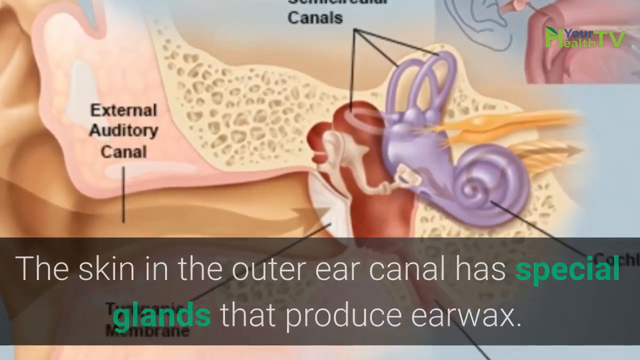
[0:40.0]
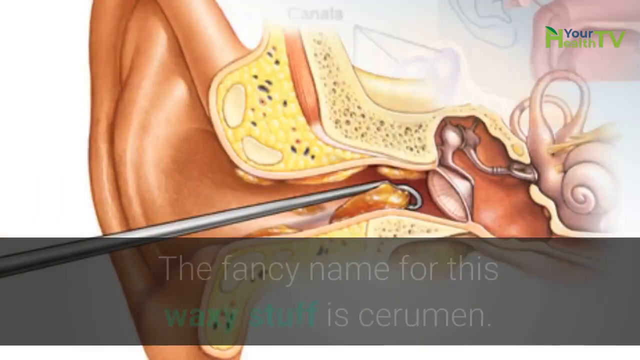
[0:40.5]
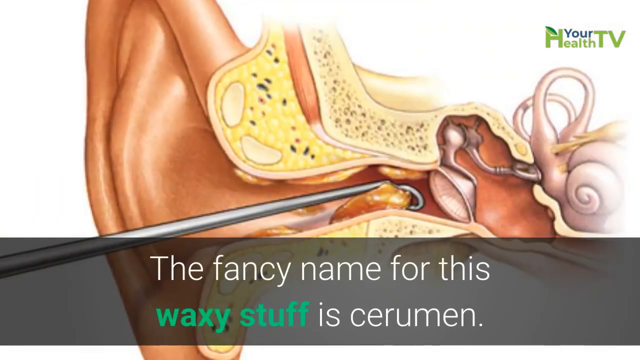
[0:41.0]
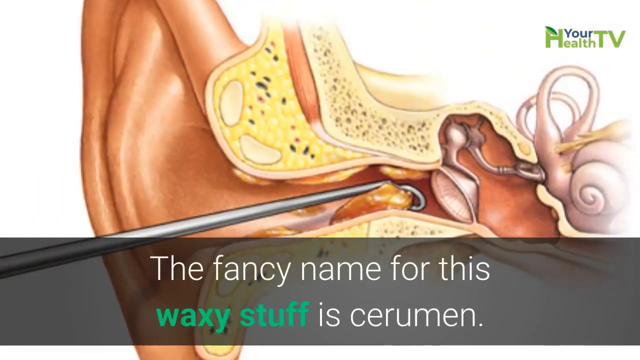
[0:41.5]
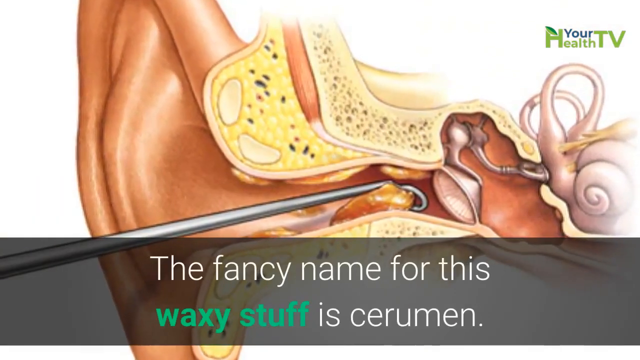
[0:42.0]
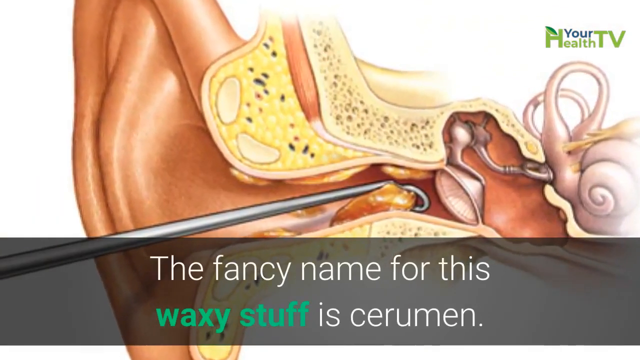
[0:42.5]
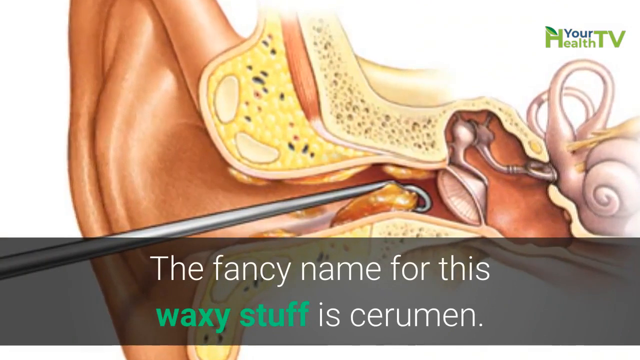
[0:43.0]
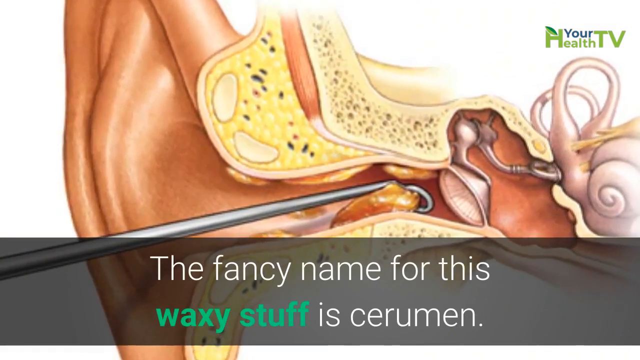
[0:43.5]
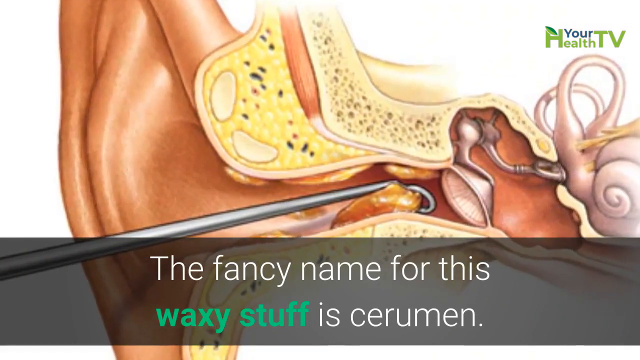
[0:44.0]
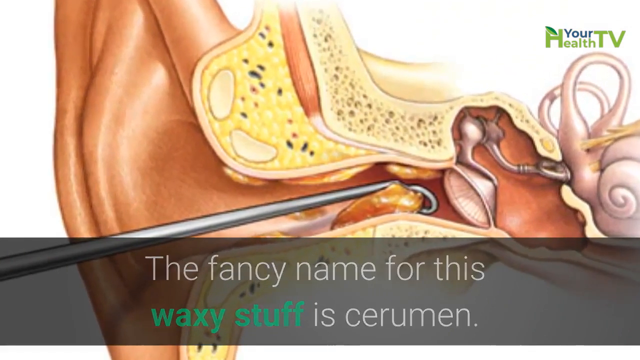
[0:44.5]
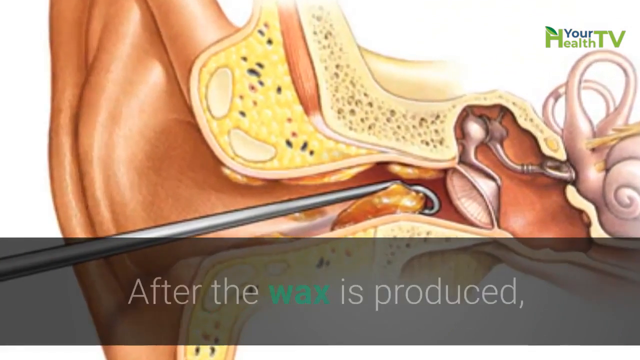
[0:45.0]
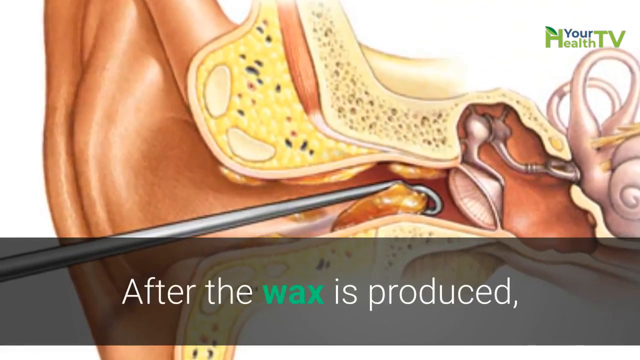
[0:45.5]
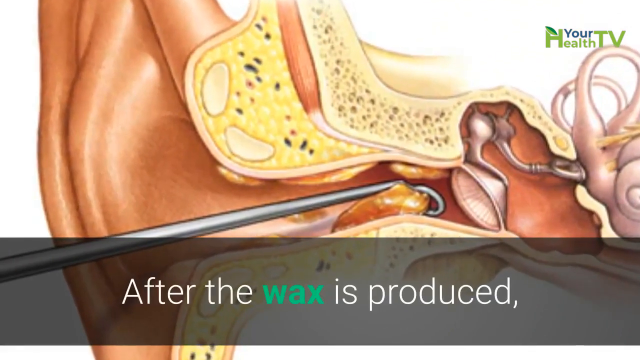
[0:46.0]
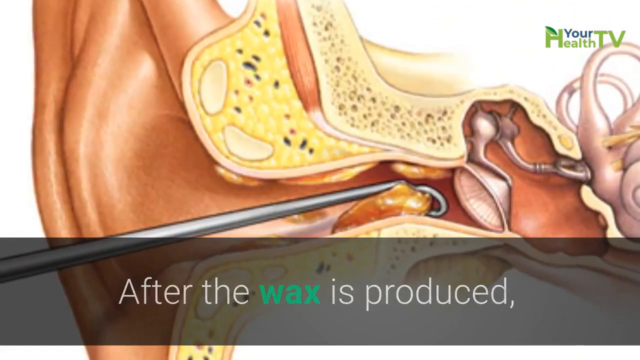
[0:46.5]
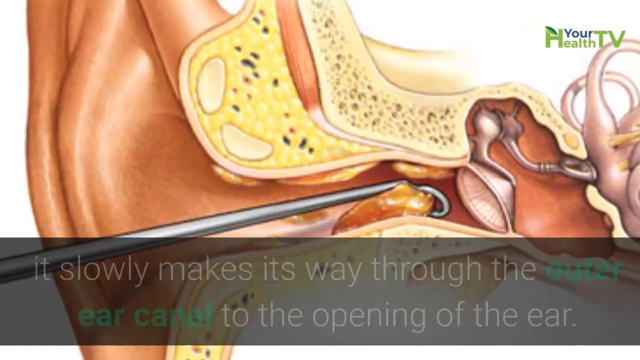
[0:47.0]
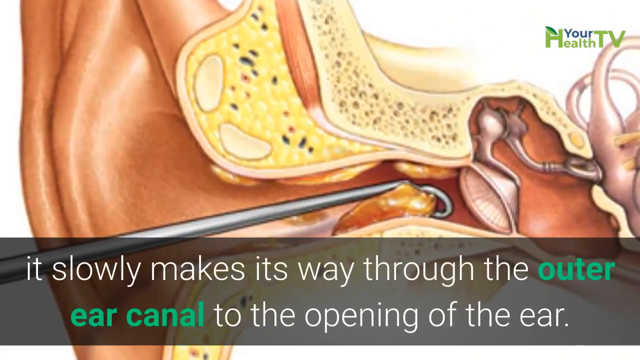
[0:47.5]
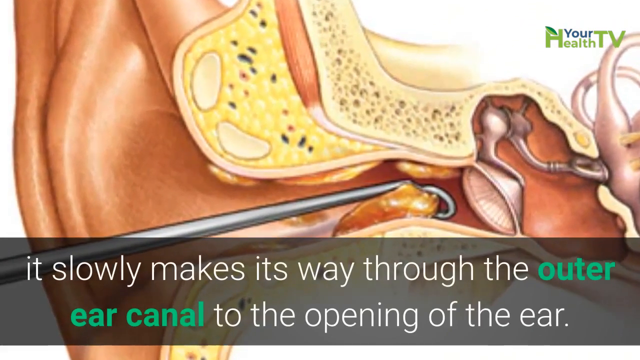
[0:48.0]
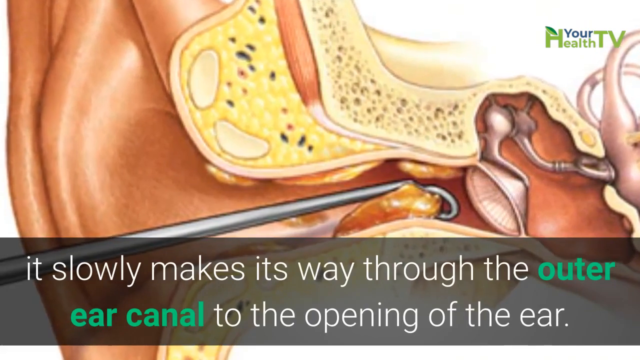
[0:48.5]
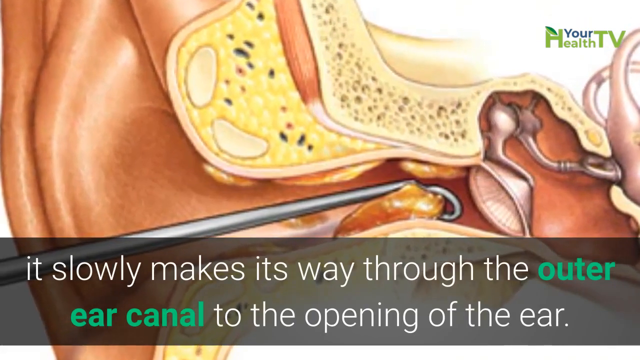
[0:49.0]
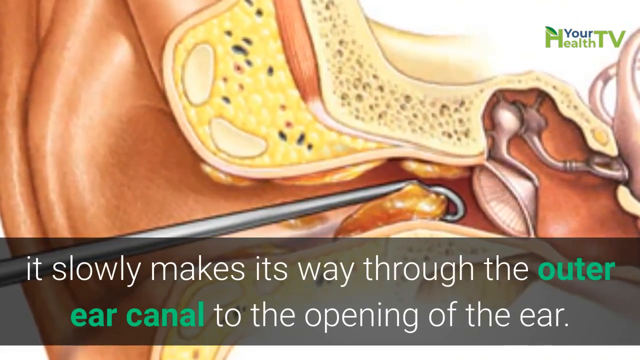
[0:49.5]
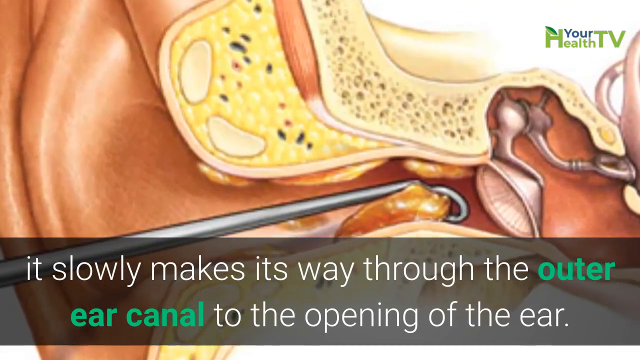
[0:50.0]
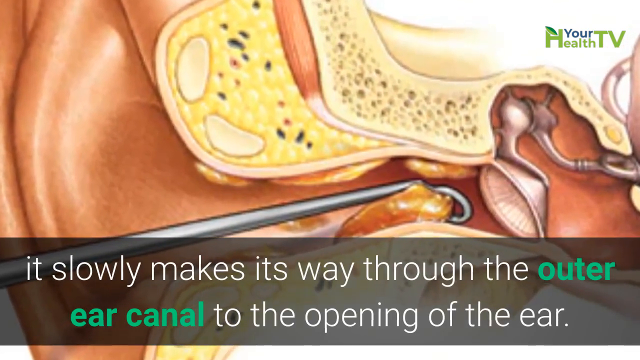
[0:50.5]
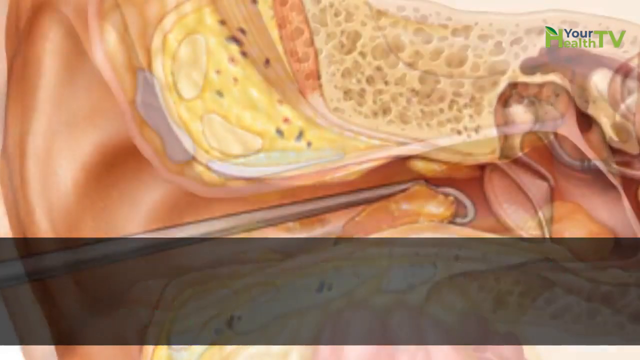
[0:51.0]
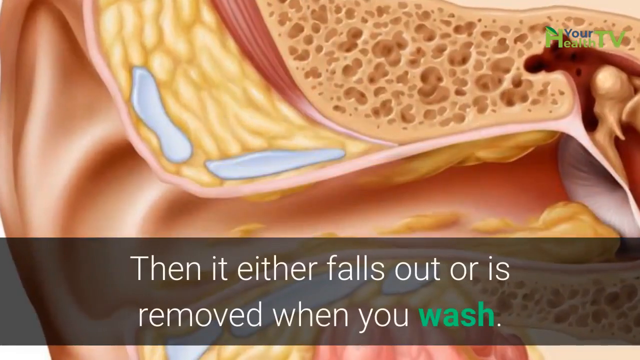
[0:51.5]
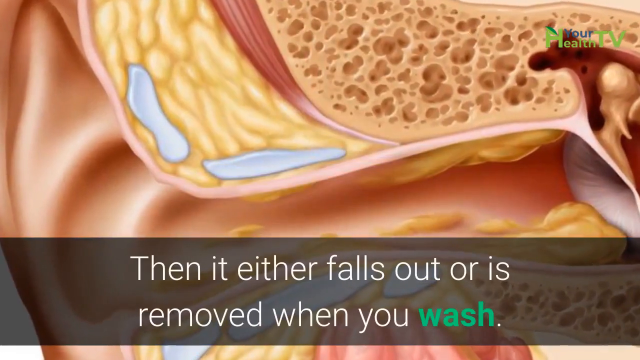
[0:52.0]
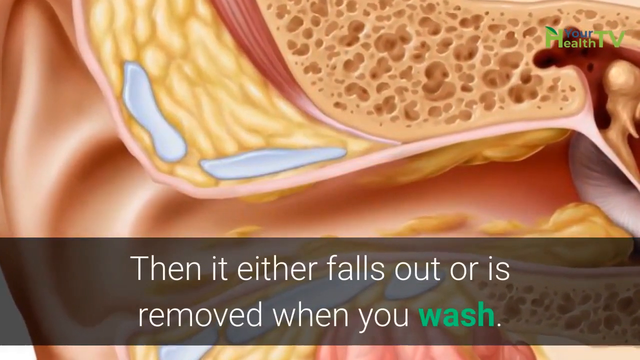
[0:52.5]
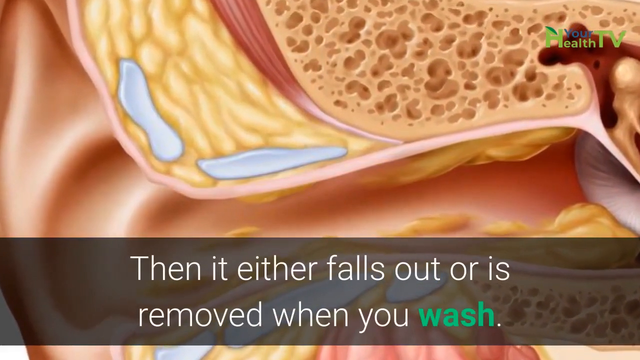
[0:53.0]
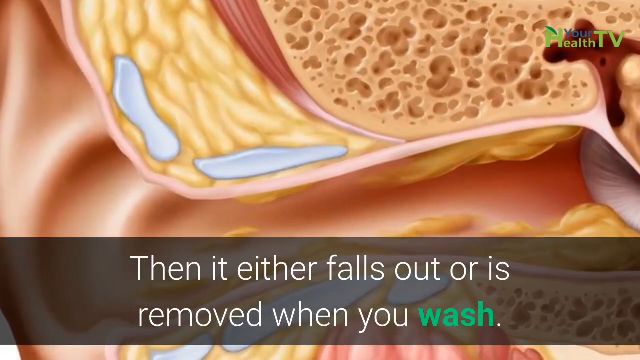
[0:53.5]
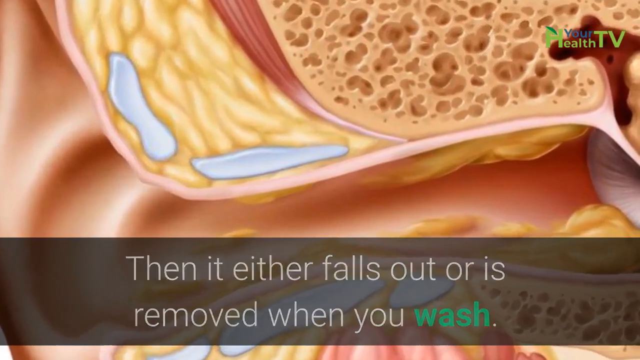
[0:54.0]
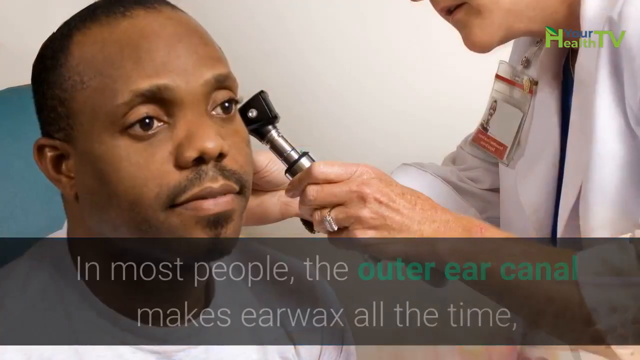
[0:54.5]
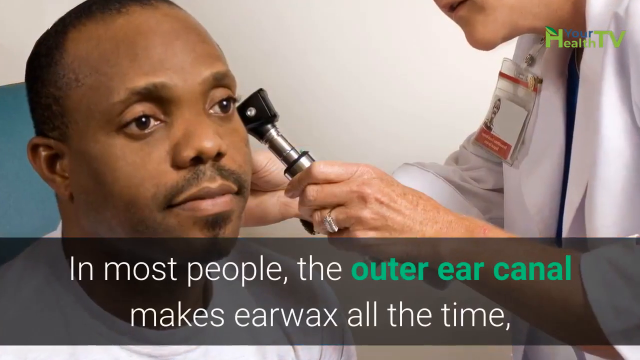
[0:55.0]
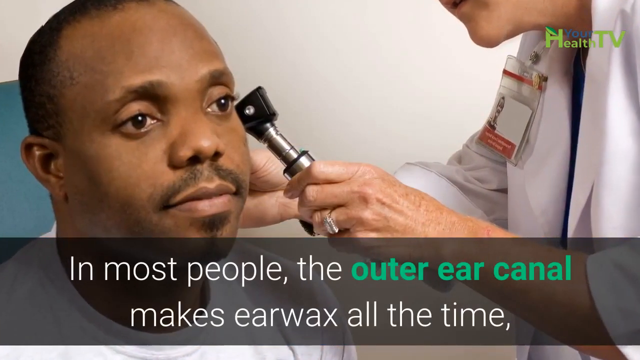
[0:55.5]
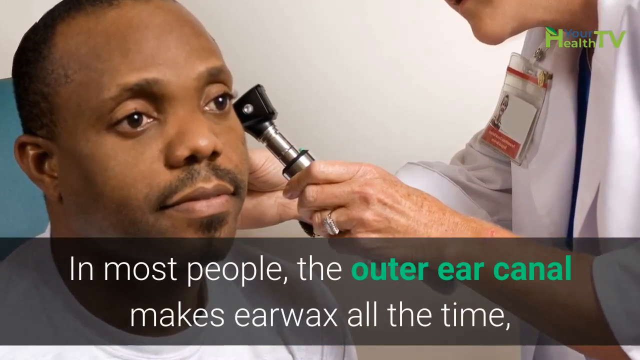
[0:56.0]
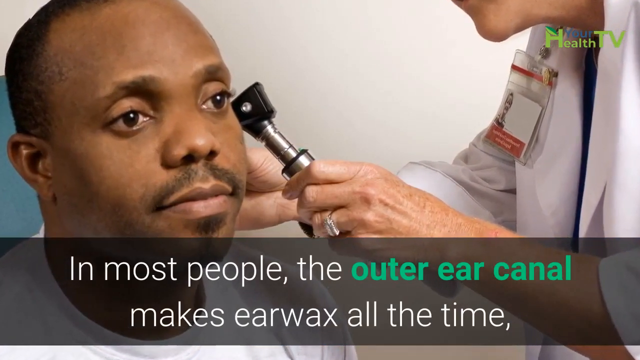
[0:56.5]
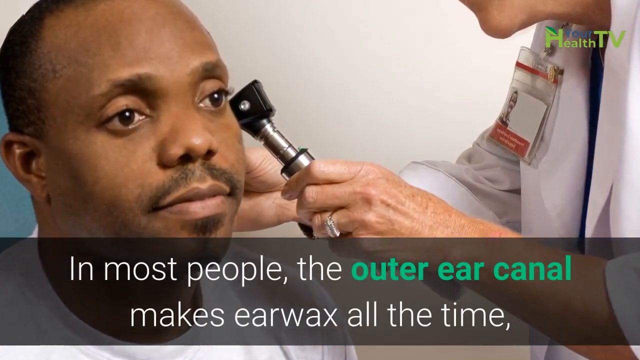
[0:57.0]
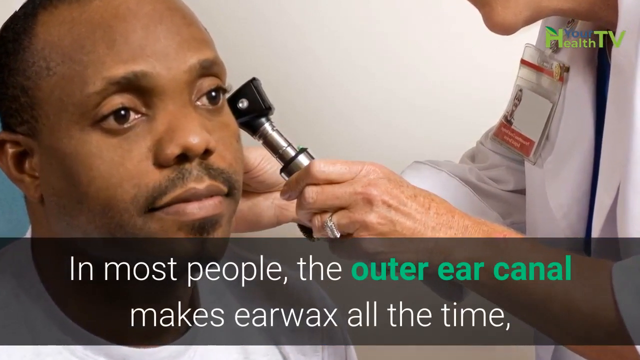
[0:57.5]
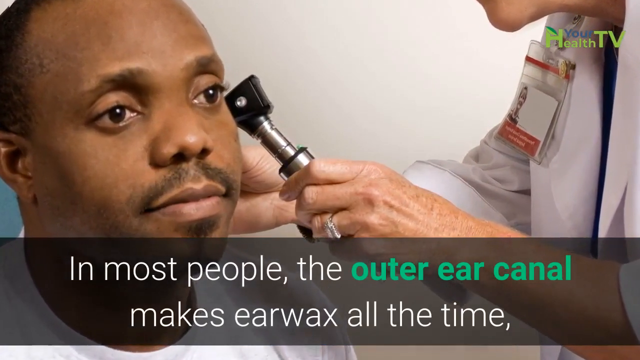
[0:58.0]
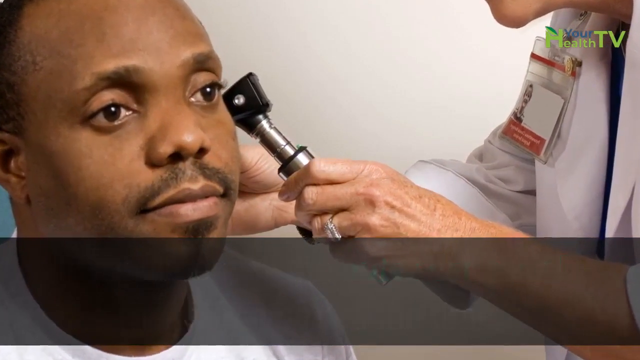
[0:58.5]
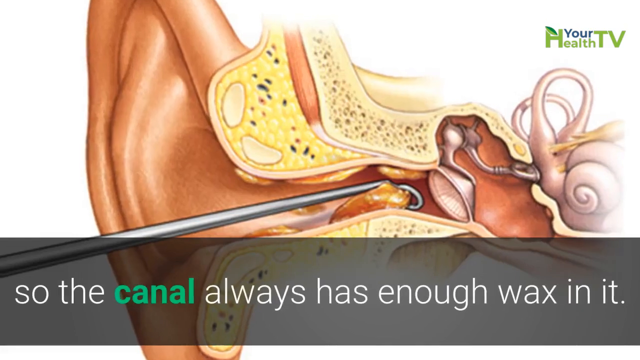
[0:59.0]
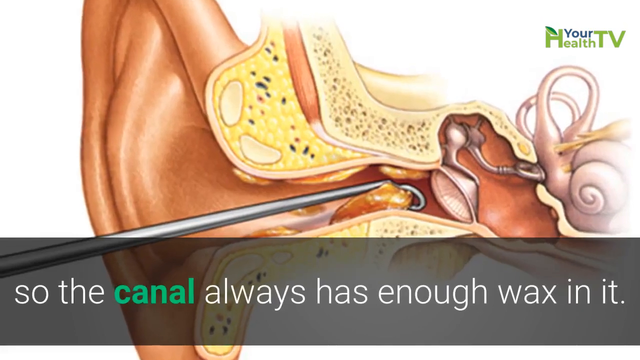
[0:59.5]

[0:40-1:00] Another cross-section diagram of an ear shows part of the outer ear along with labeled areas including the cochlea, the tympani and glands that secrete earwax. In the illustration a steel tool is inserted into the ear to remove wax from the ear canal. Text reads "the fancy name for this waxy stuff is cerumen" and "after the wax is produced, it slowly makes its way through the outer ear canal to the opening of the ear." The view zooms in on the same diagram, showing the location of the earwax in the ear canal as it is being removed, with the text "then it either falls out or is removed when you wash." Another close-up shows the end of the ear canal where it reaches the outer ear, with a little debris and waxiness still in the outer ear canal. Next is an image of a patient on the left-hand side: an African-American man with a mustache, a little goatee and a close haircut, facing forward and looking to the viewer's right. Only the doctor's hands and part of their body are visible; they look like an older person, wear a ring on the left ring finger, and appear to be female. The doctor wears a white lab coat with what looks like a blue top underneath, holds the patient's ear with the right hand, and holds a tool for looking inside the ear canal in the left hand. Text reads "in most people, the outer ear canal makes earwax all the time, so the canal always has enough wax in it."